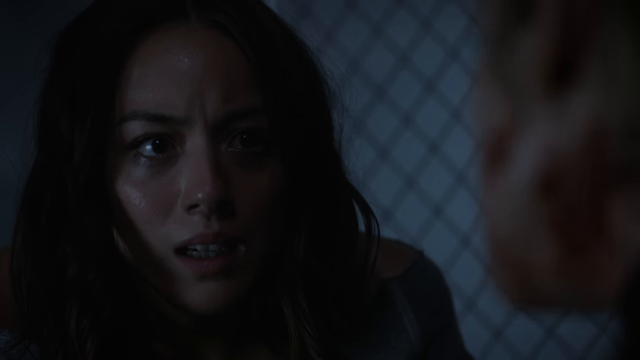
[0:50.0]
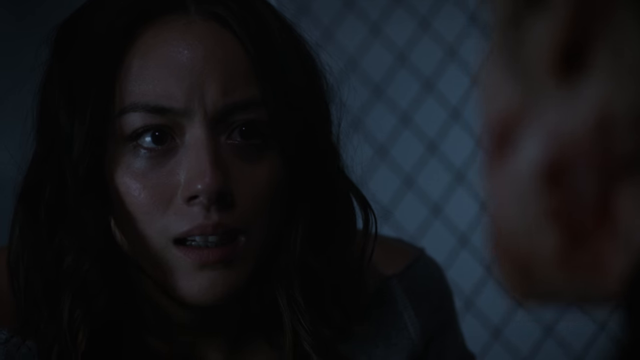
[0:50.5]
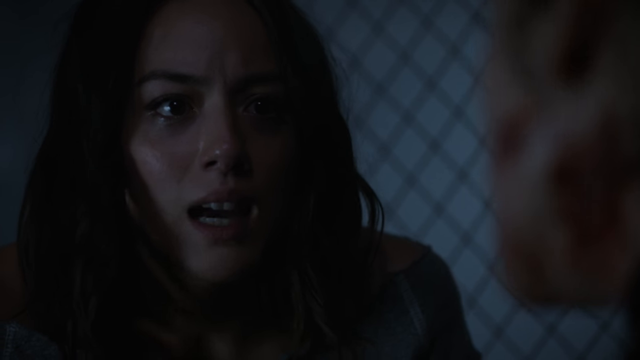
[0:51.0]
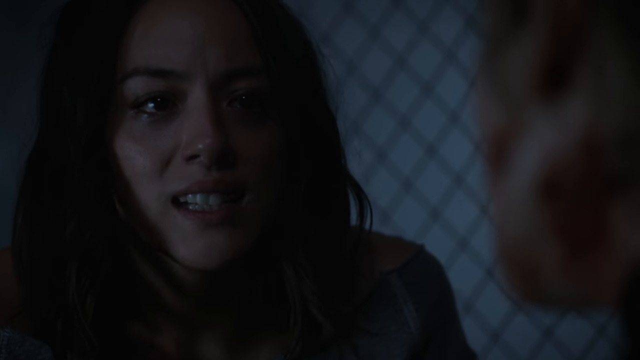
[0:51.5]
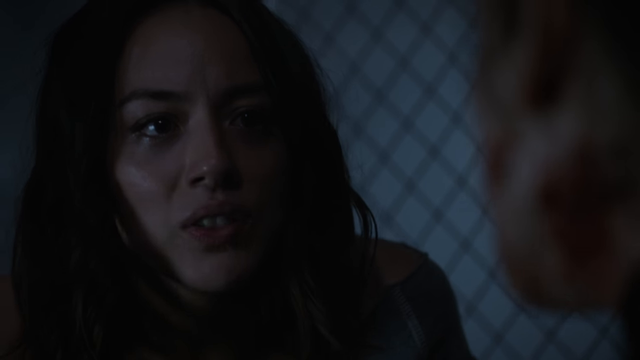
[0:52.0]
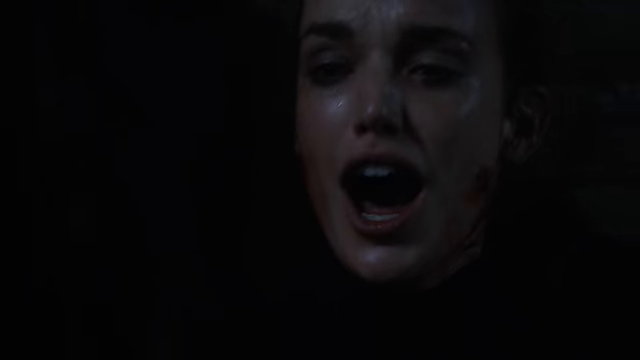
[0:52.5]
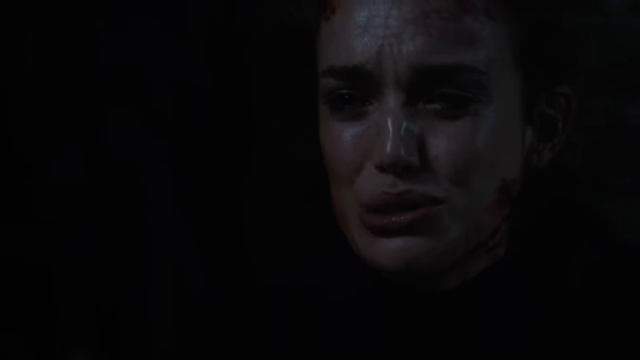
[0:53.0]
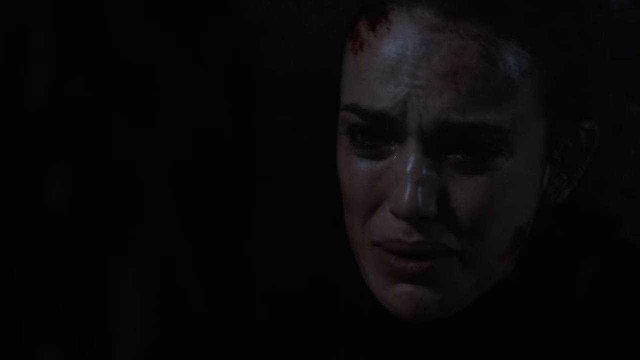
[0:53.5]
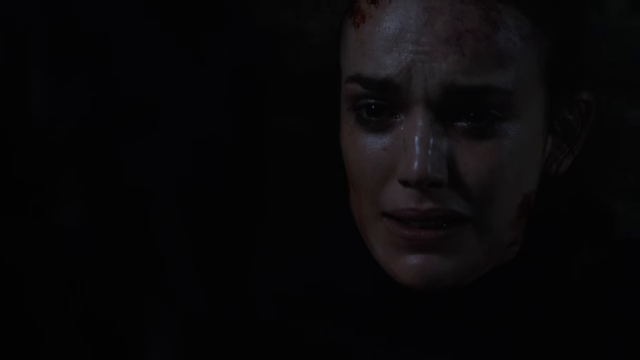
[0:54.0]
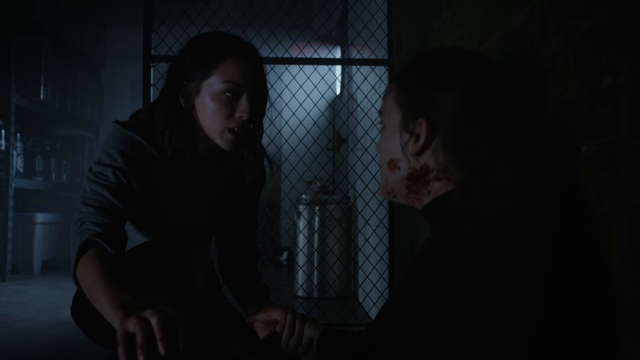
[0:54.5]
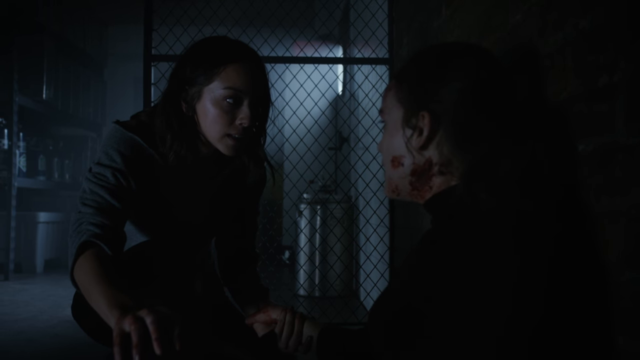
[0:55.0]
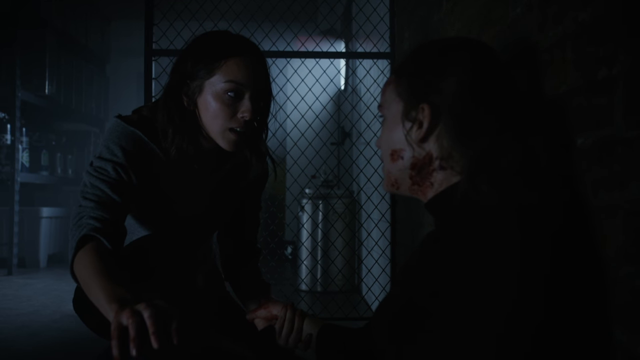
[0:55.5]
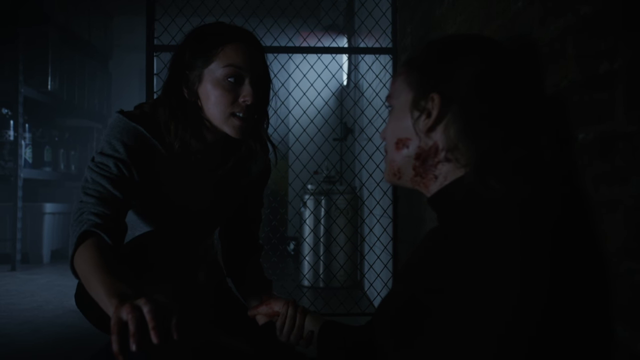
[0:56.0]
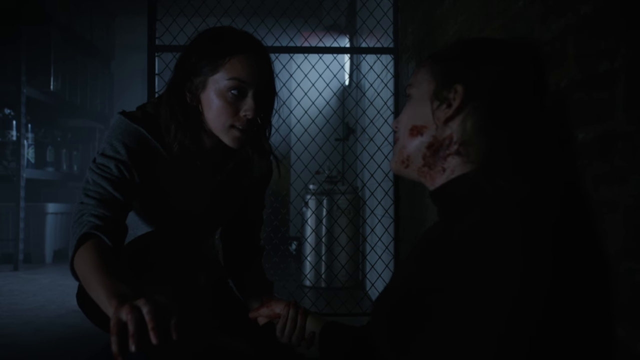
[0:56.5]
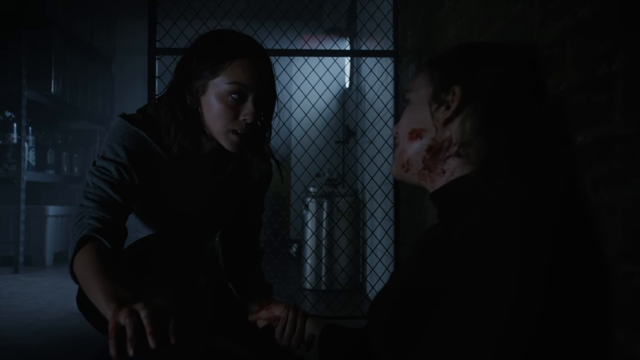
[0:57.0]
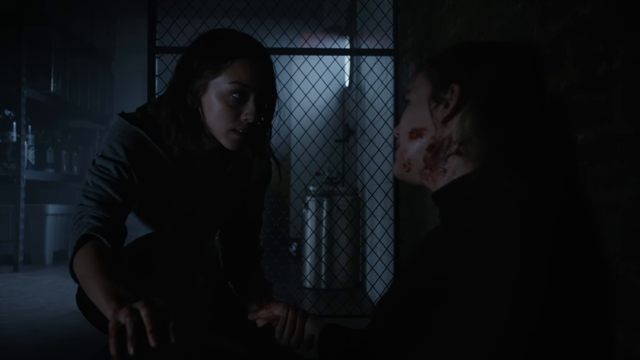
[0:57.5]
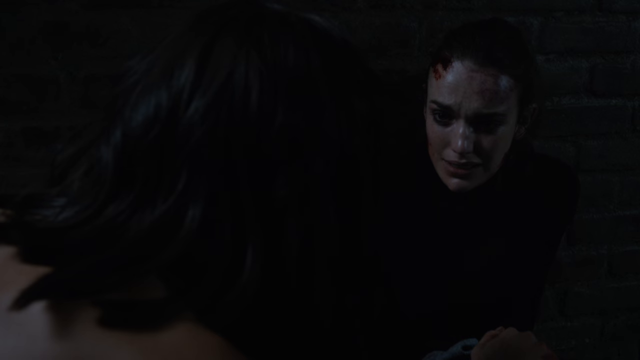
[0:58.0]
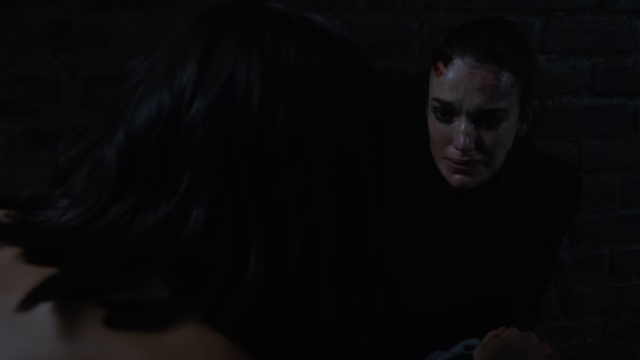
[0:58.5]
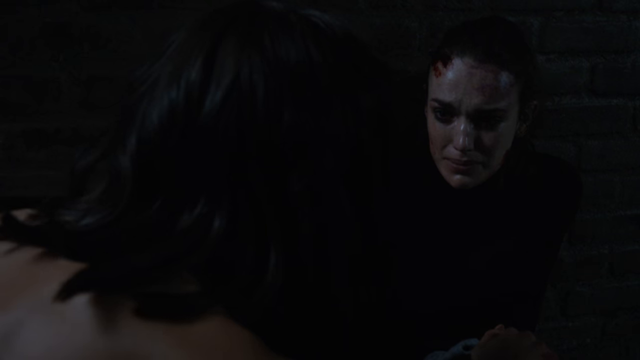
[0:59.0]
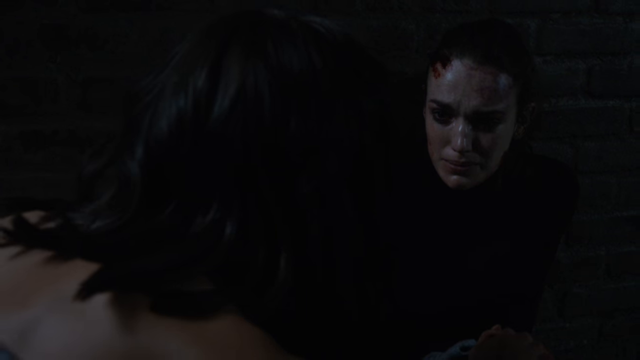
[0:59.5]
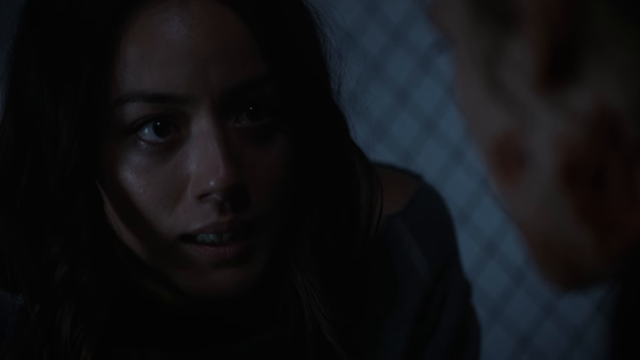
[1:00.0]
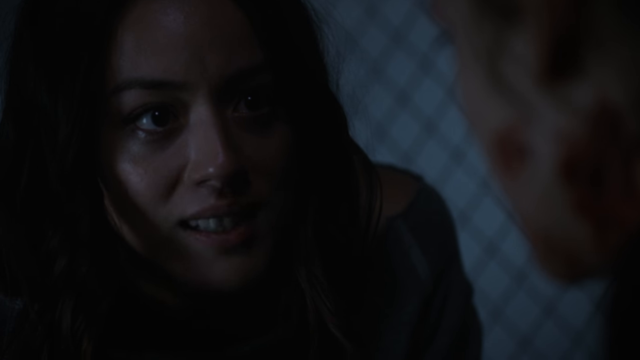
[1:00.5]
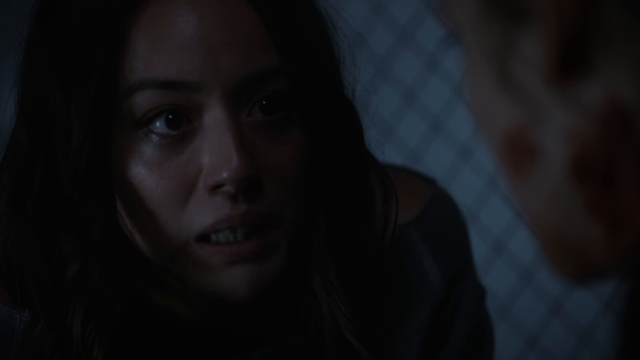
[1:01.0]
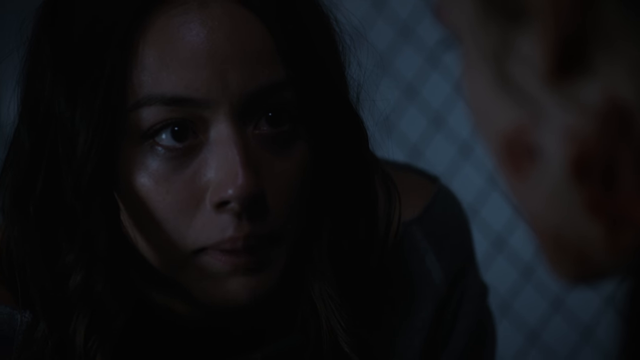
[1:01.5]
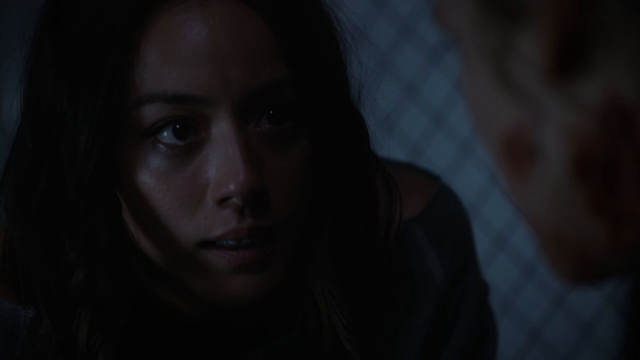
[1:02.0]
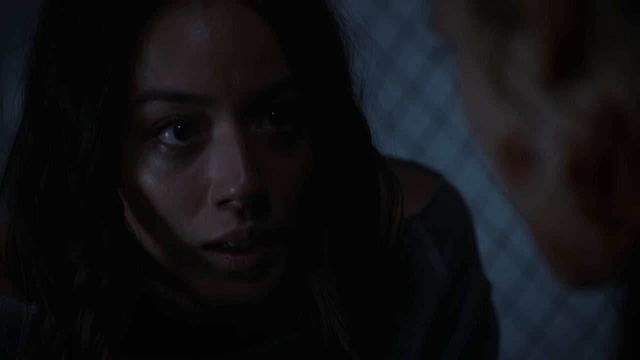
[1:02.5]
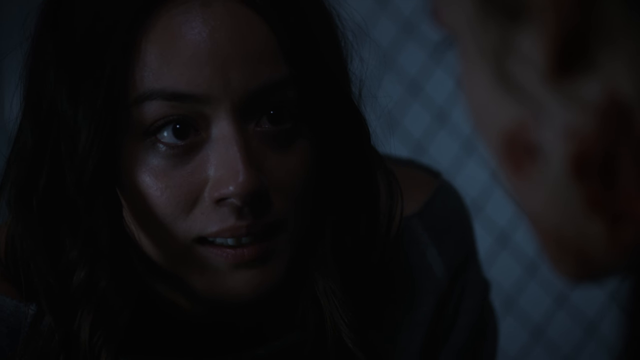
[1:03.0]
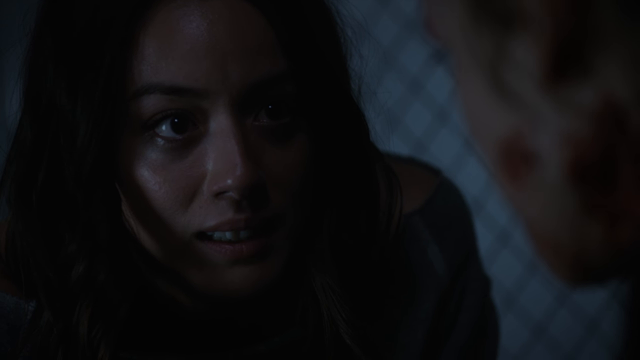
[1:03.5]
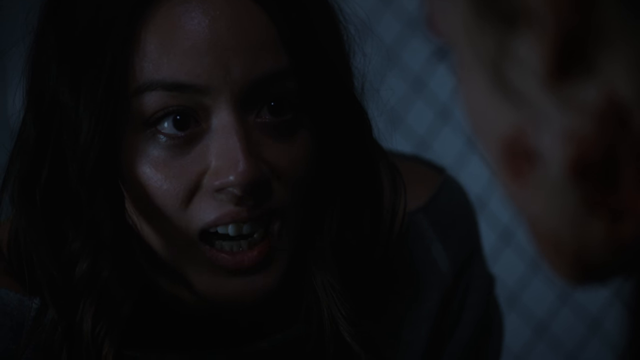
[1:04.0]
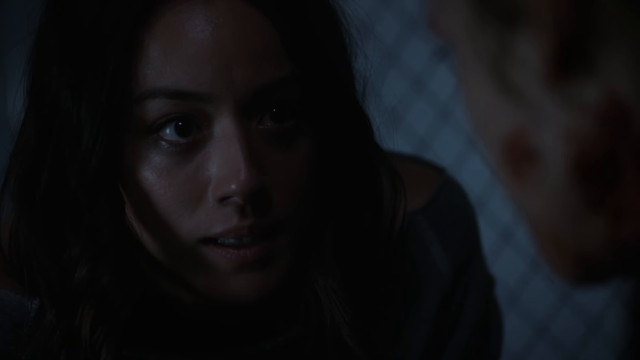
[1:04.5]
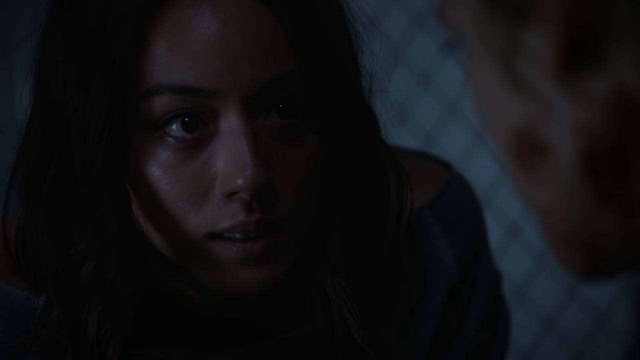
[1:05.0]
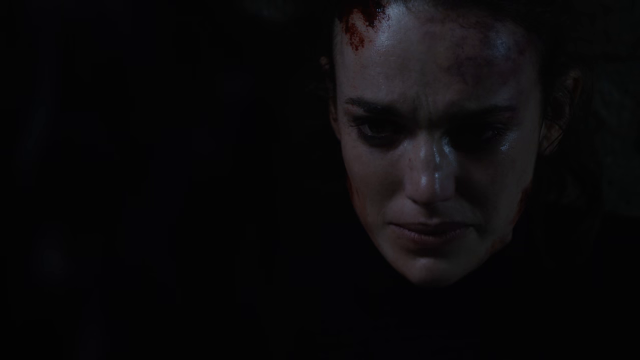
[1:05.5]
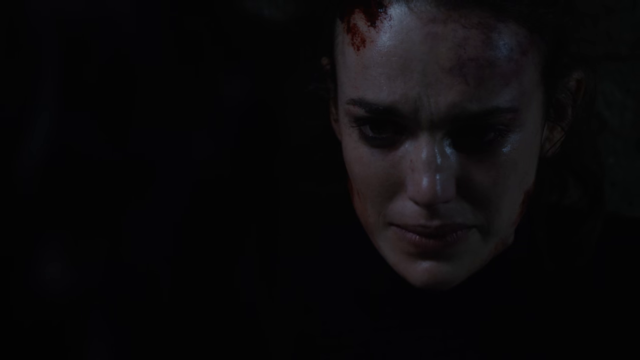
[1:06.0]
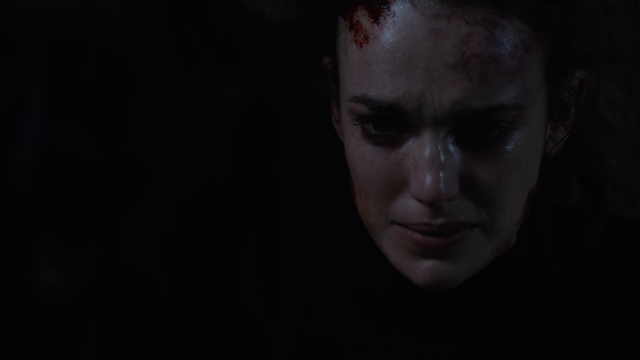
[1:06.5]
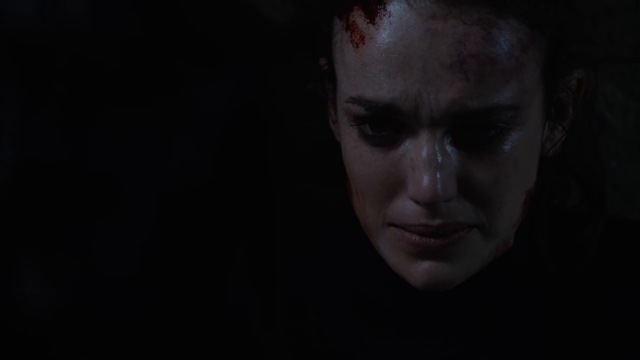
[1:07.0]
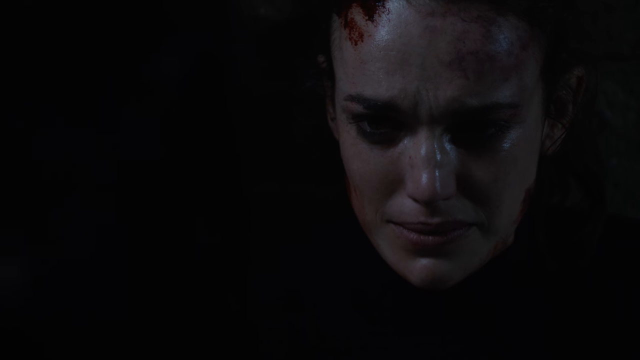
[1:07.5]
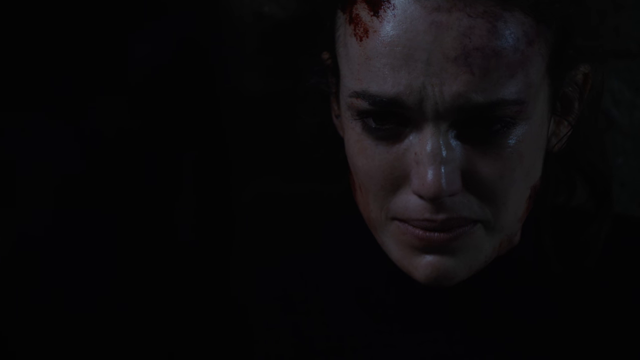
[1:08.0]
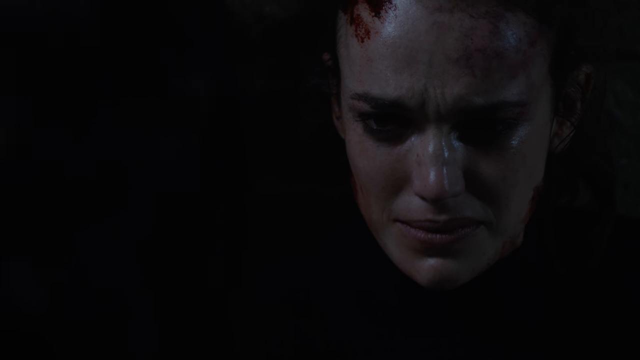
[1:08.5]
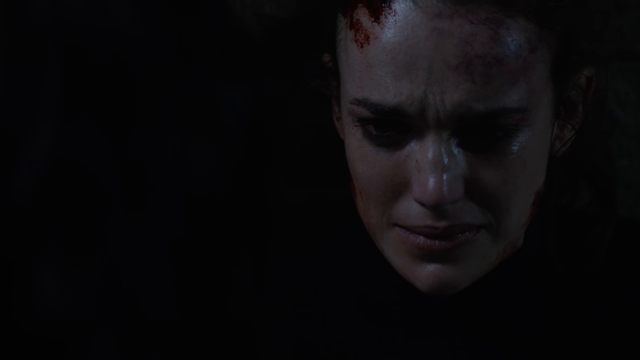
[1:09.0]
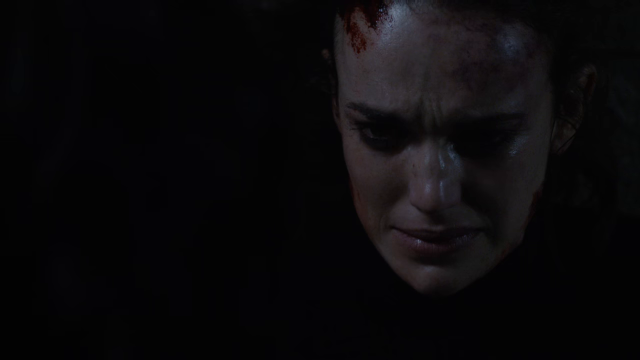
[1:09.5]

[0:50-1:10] The conversation between the two women continues. The woman in blue, with medium or shoulder-length dark hair, is still kneeling in front of the woman sitting on the bench against the brick wall. She now has each of her hands on the woman's knees and is very close to her face as she speaks. The seated woman's mascara or eyeliner is heavily smudged black, her lipstick looks kind of worn off, there is blood on her face, and her face looks kind of grimy. She appears to speak in a very emotional way, moves her head a bit, and always looks on the verge of crying. She looks down fairly often; her hair is hard to make out and may be pulled back. The woman in blue seems very in control and poised and makes direct eye contact.